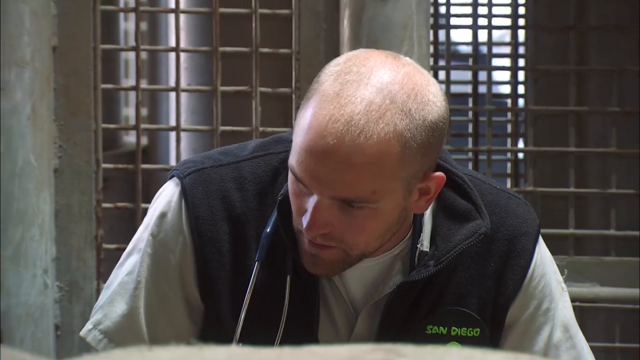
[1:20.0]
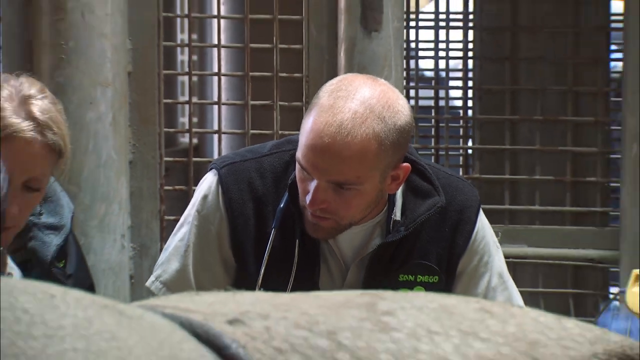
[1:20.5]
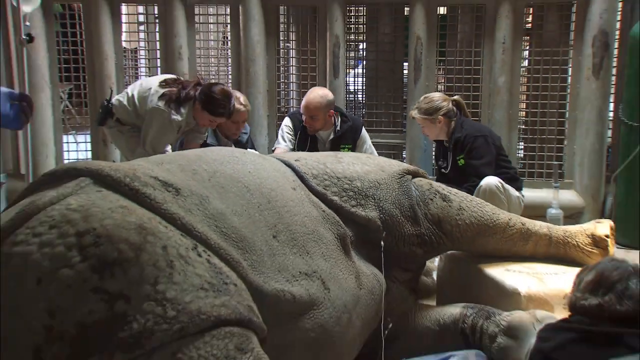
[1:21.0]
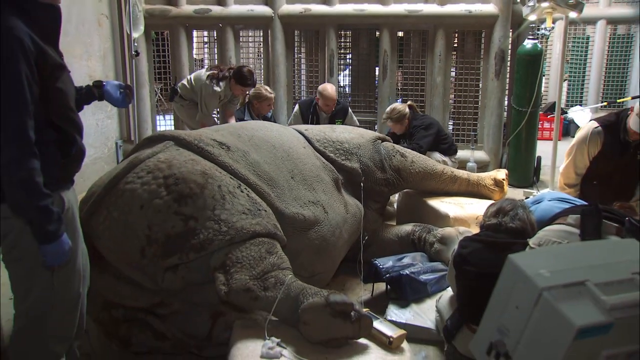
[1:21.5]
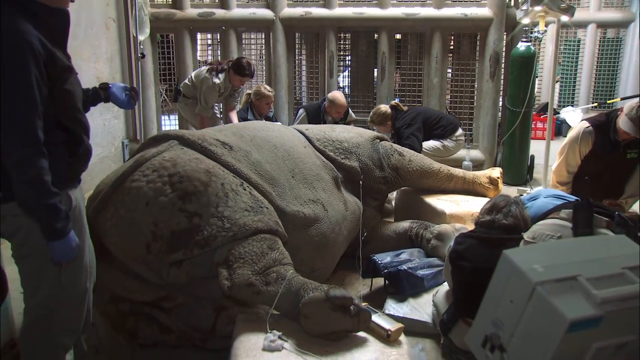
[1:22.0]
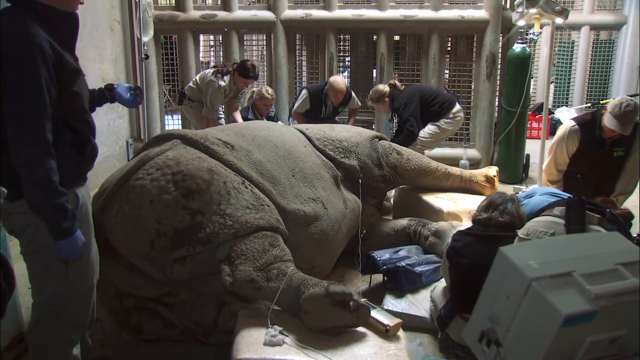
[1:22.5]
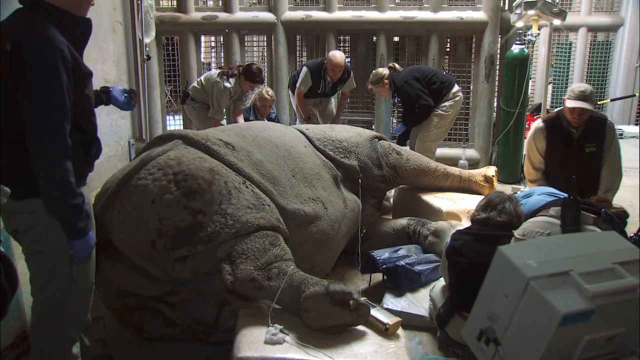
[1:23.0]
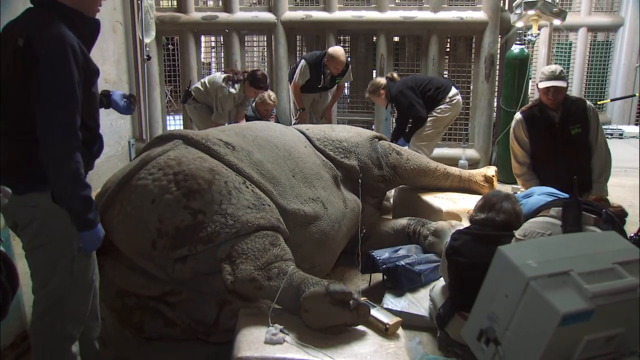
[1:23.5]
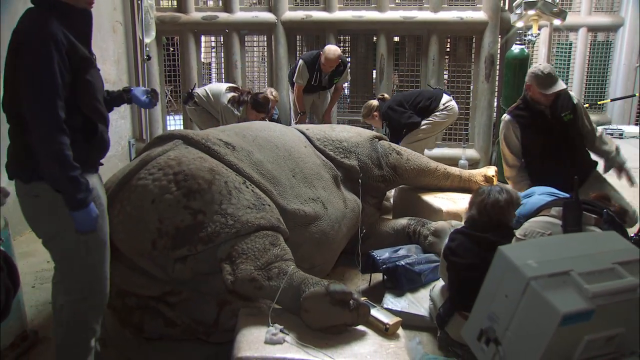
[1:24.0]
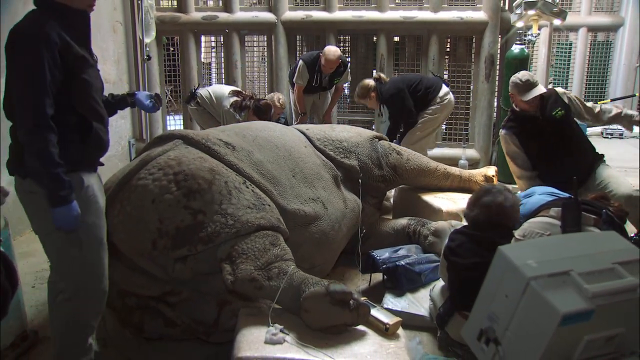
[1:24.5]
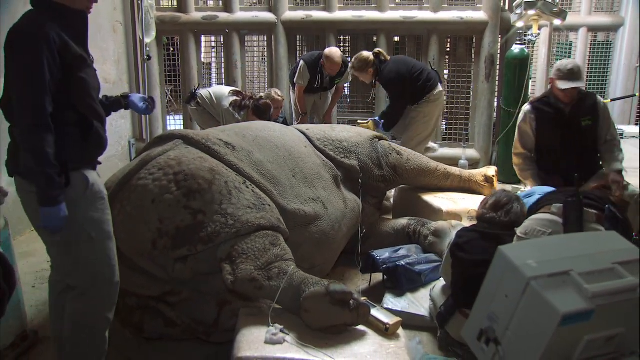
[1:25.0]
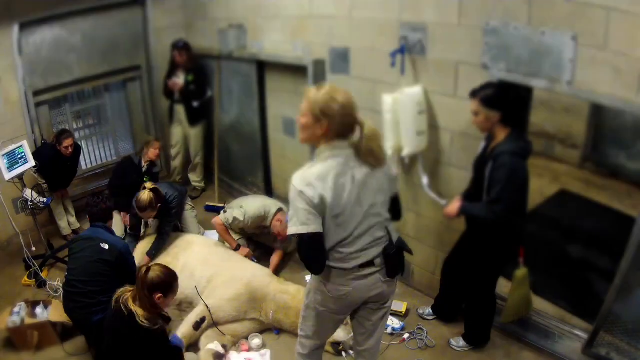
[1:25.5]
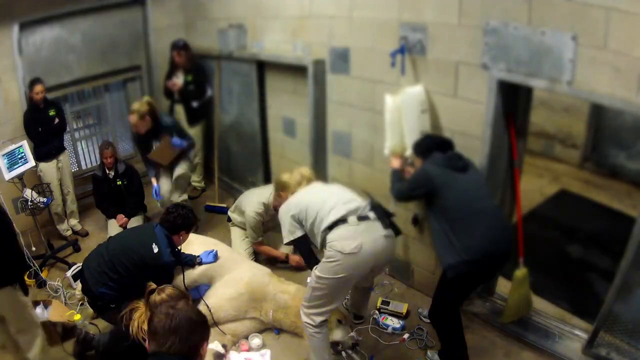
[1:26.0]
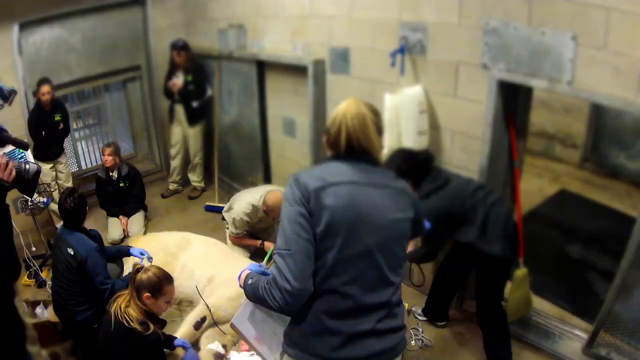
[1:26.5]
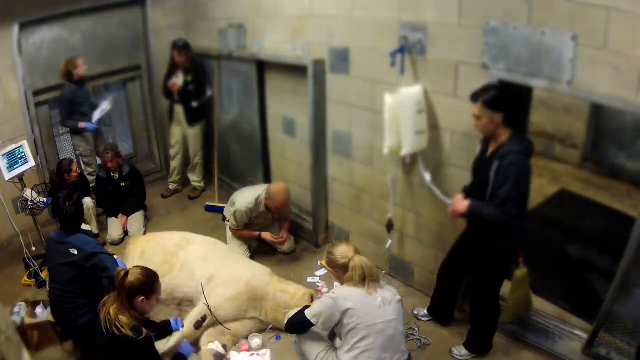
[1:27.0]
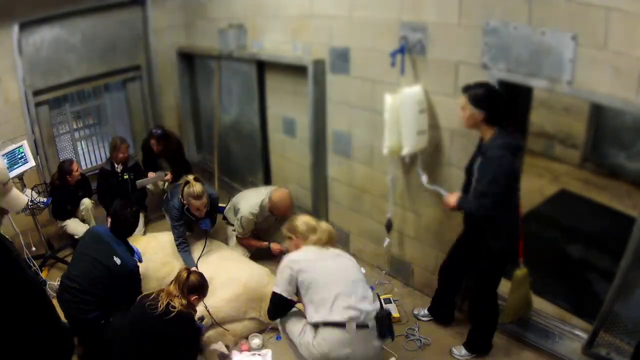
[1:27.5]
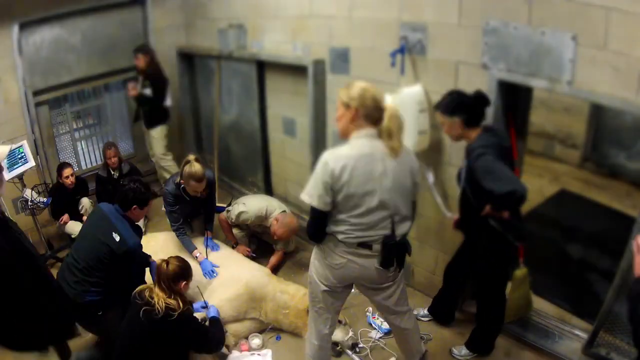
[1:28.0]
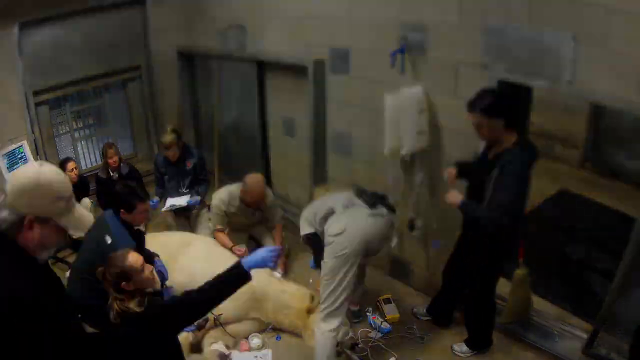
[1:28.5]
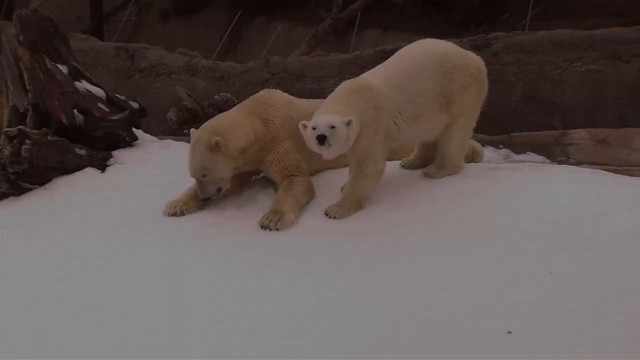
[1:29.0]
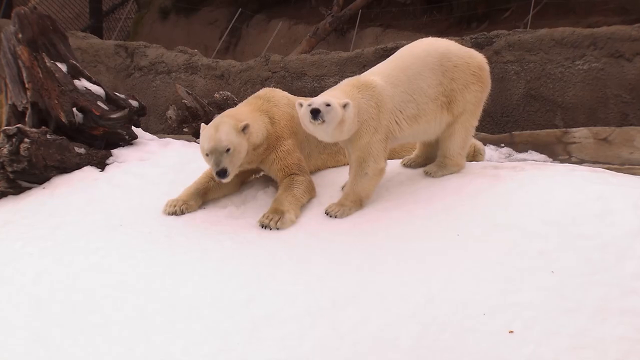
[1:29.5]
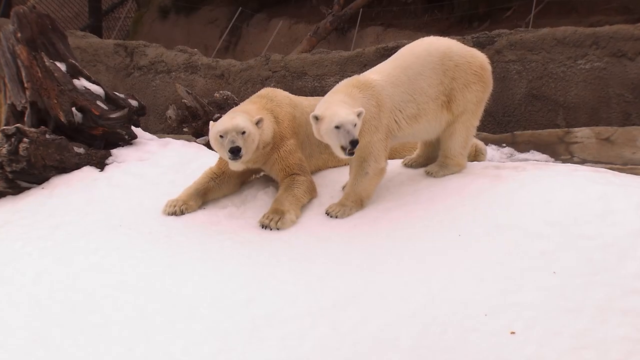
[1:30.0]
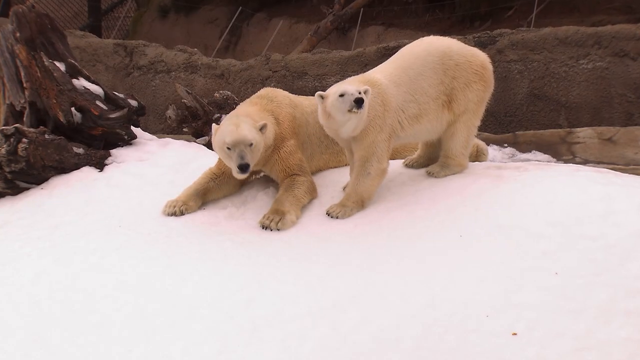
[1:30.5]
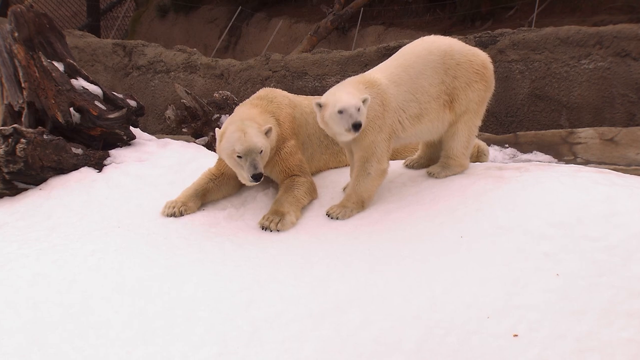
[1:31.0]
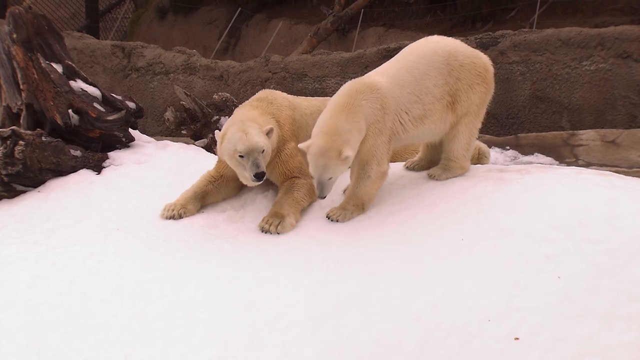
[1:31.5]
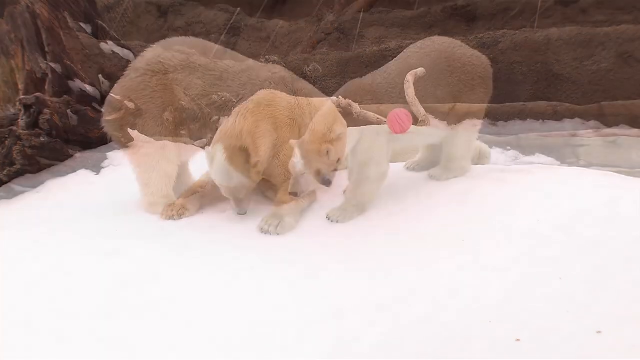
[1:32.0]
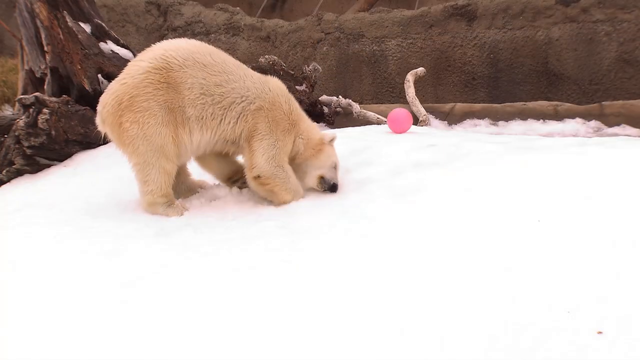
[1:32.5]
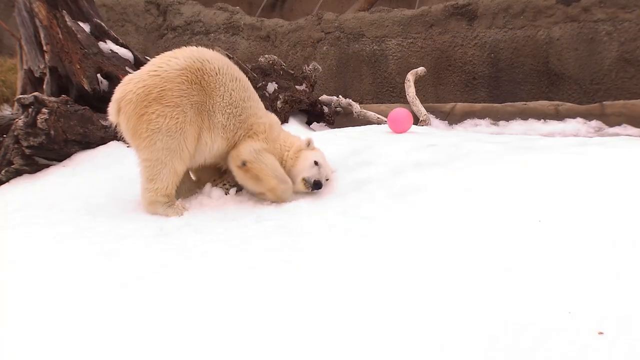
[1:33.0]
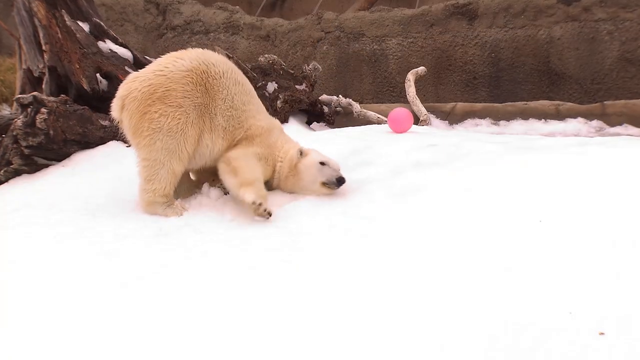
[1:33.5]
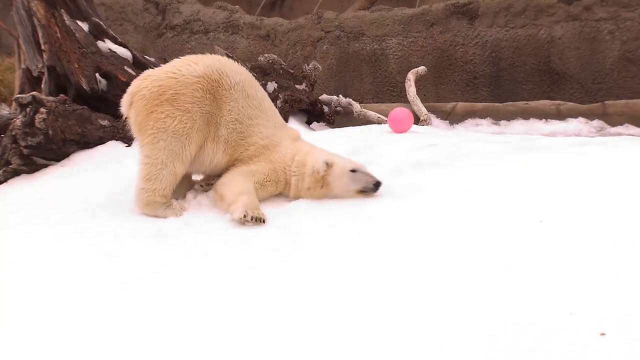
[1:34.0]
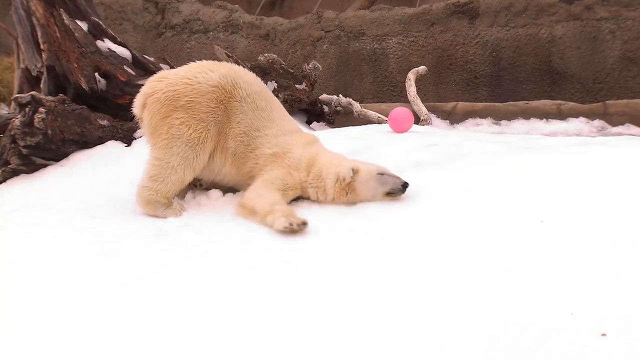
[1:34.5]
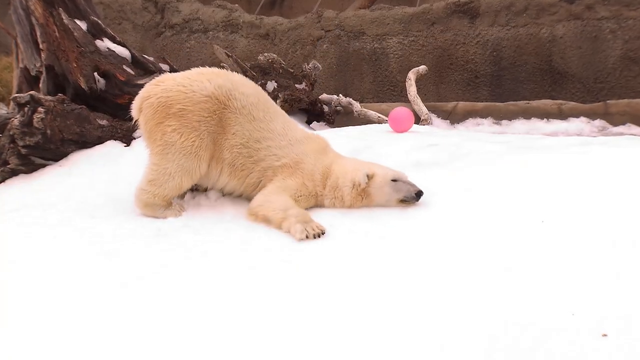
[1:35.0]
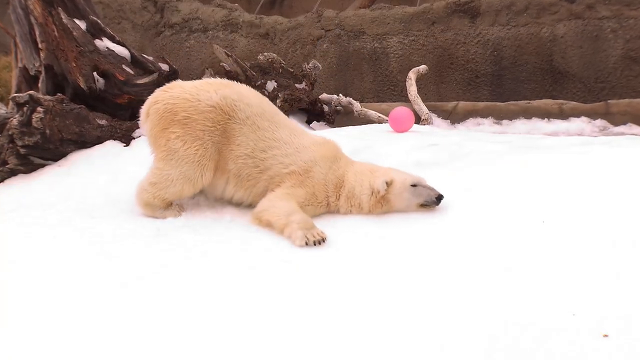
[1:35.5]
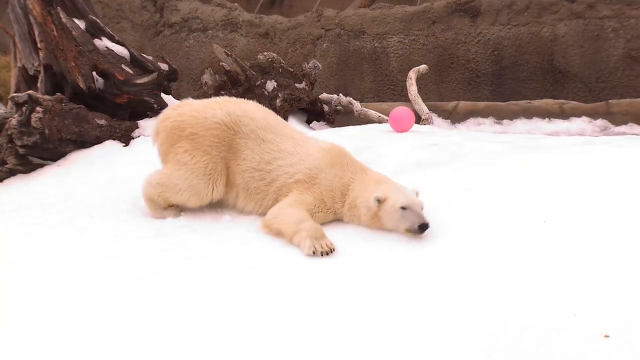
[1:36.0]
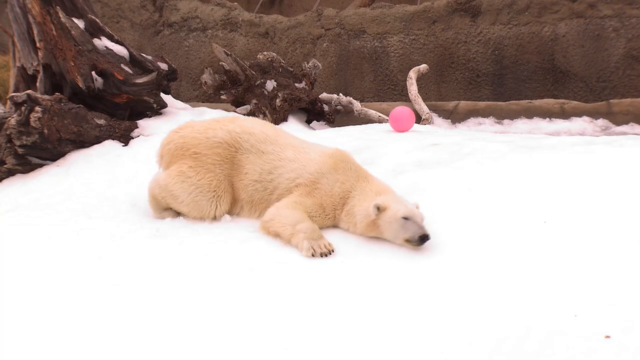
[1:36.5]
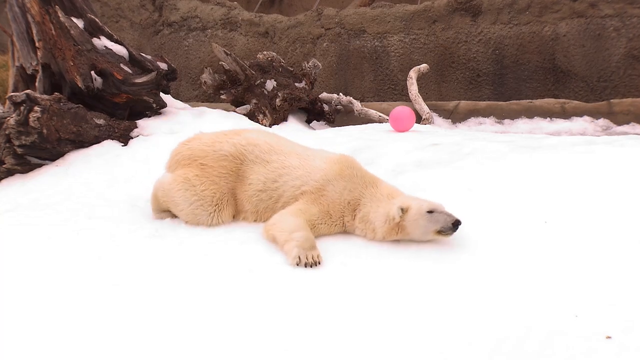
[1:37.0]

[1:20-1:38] The main veterinarian is with what looks like a big rhinoceros lying on its side on the ground, and he looks it over. The scene then changes to the polar bear on the ground on its side, with a team of veterinarians looking at it and doing medical work. The scene changes again to two polar bears back in their exhibit area, kind of playing around and rubbing on the snow; they look fine and appear to be enjoying the snow.